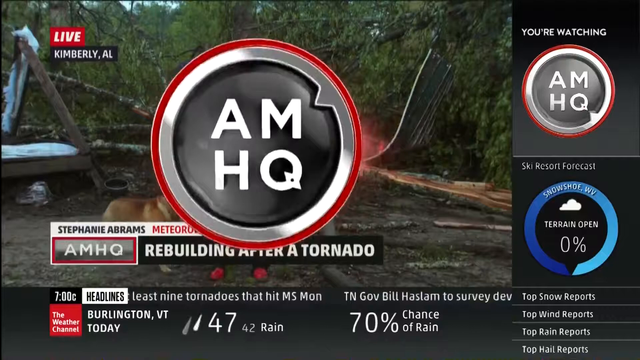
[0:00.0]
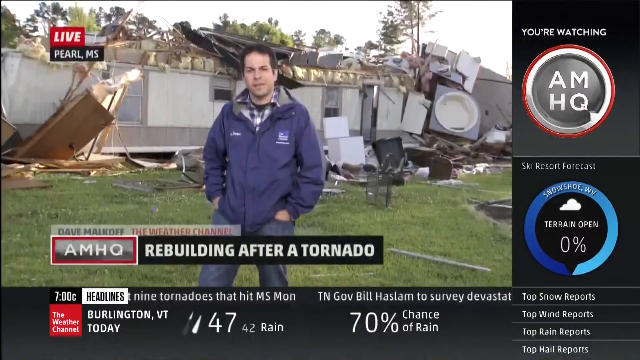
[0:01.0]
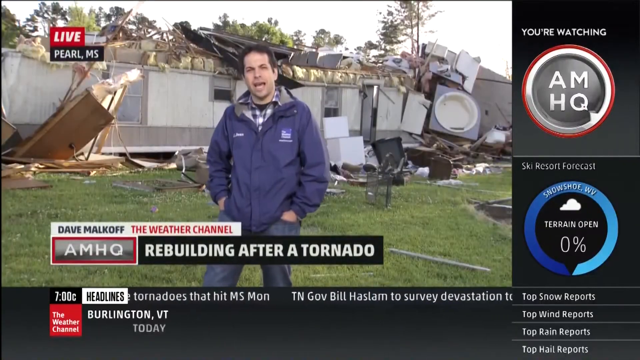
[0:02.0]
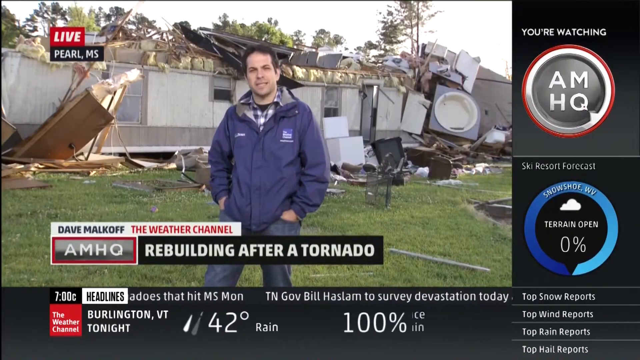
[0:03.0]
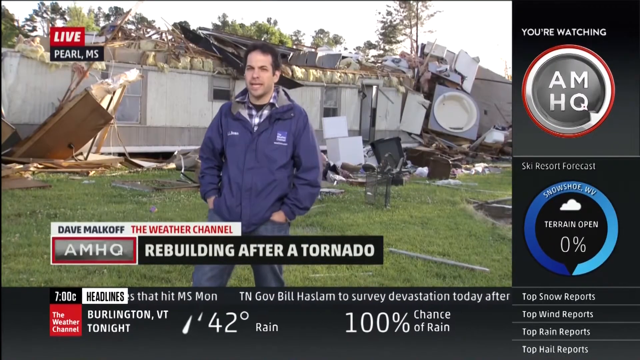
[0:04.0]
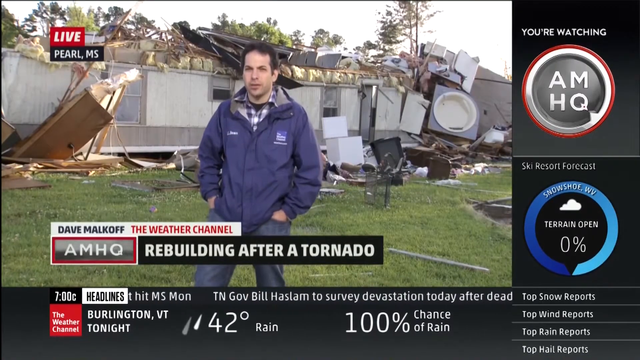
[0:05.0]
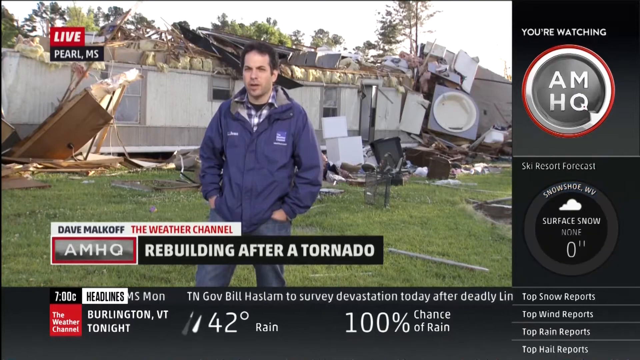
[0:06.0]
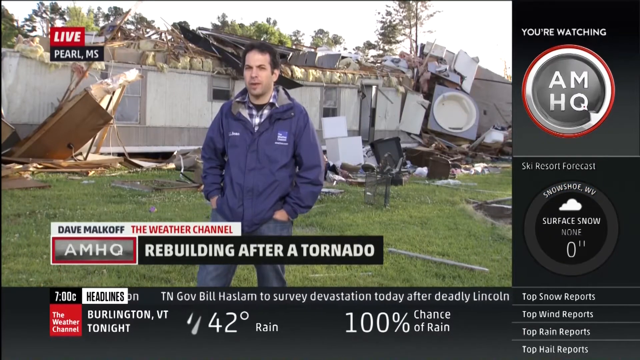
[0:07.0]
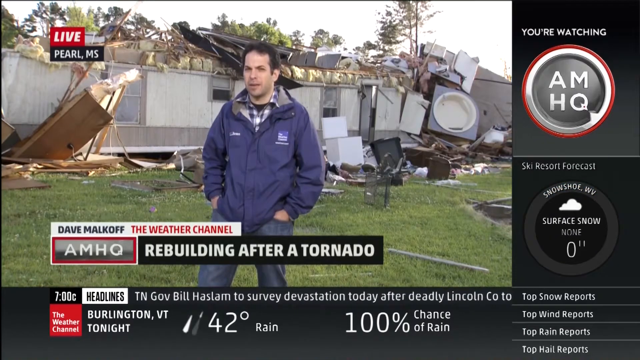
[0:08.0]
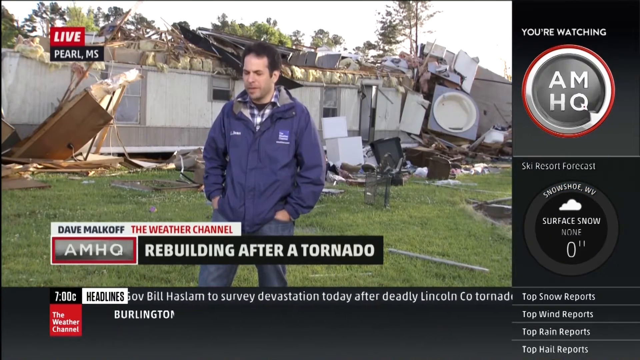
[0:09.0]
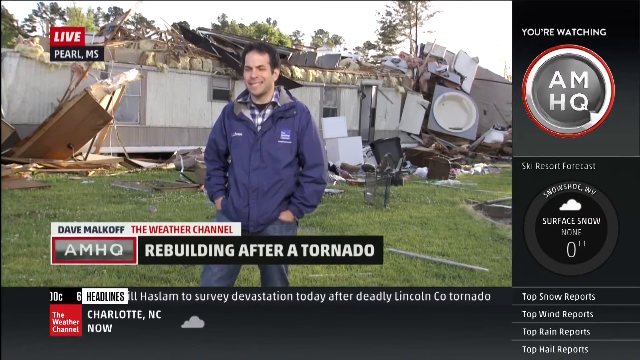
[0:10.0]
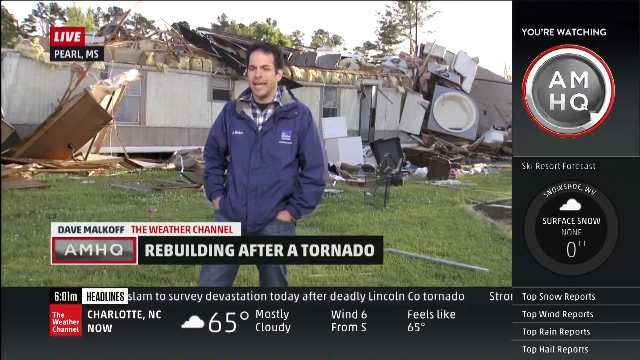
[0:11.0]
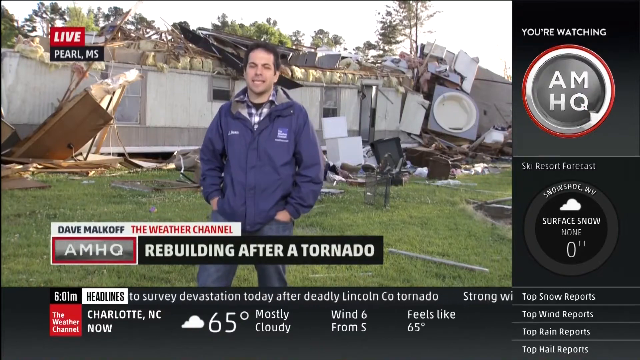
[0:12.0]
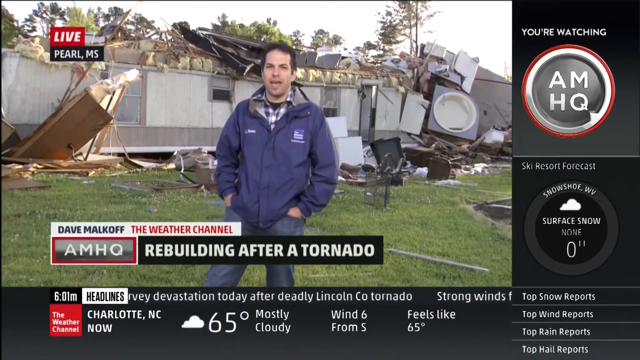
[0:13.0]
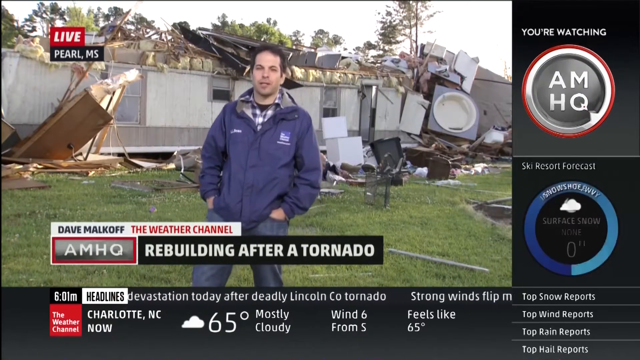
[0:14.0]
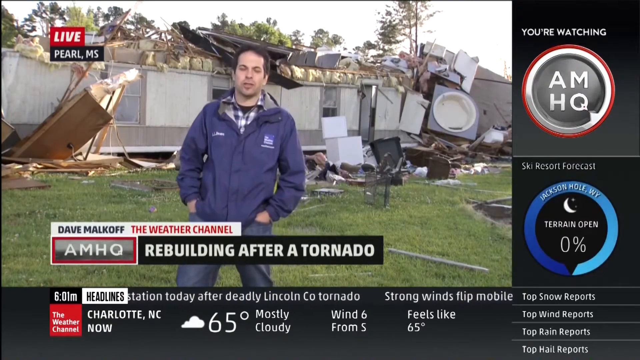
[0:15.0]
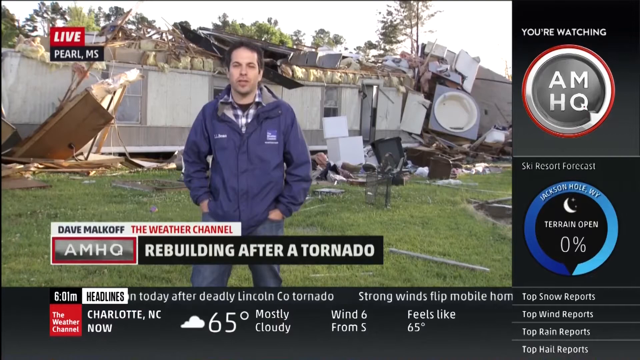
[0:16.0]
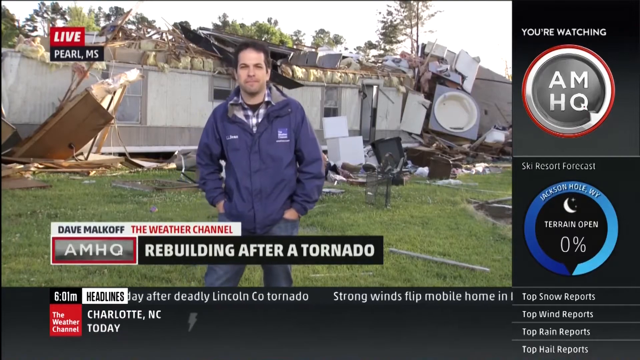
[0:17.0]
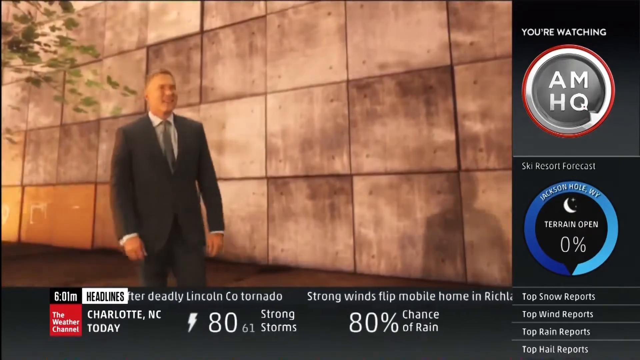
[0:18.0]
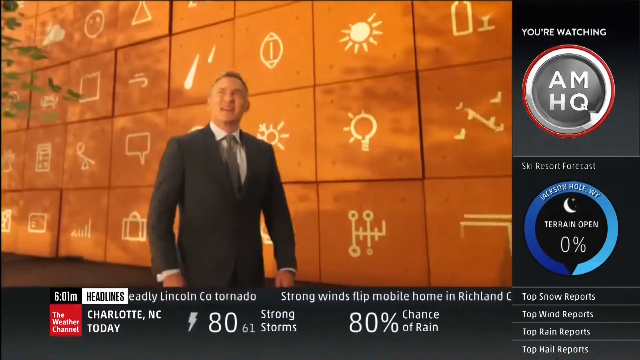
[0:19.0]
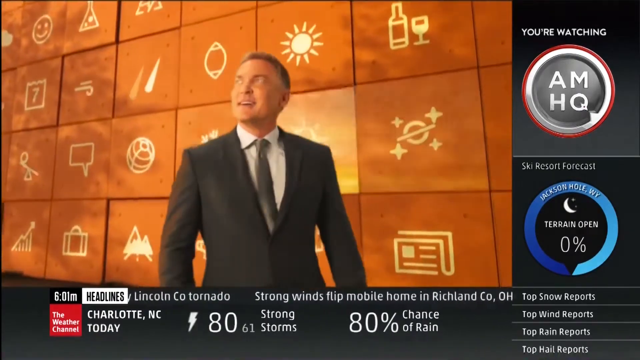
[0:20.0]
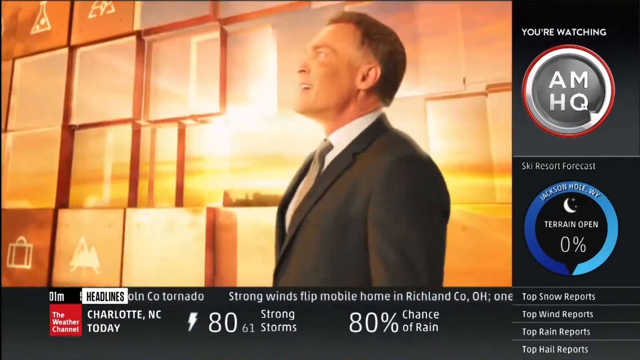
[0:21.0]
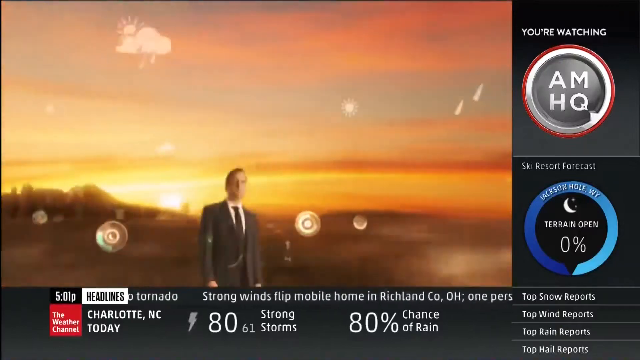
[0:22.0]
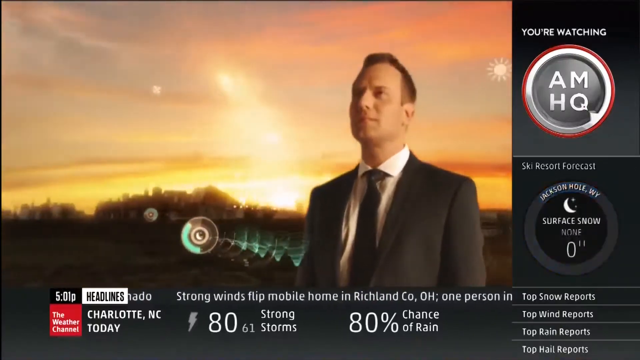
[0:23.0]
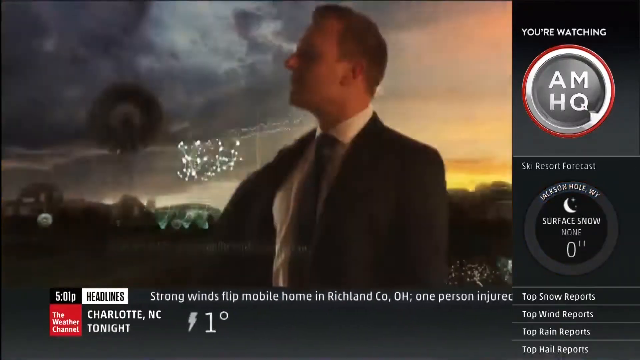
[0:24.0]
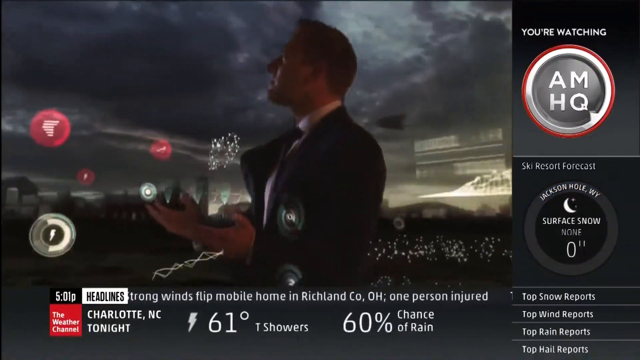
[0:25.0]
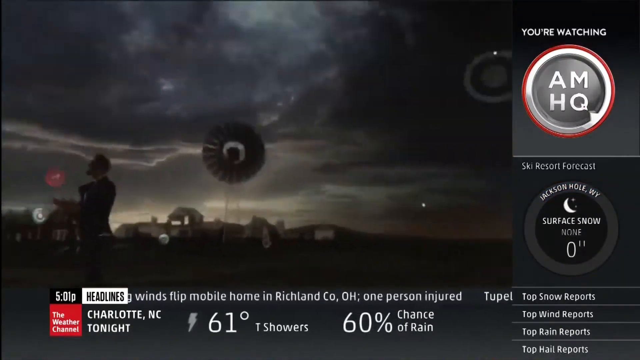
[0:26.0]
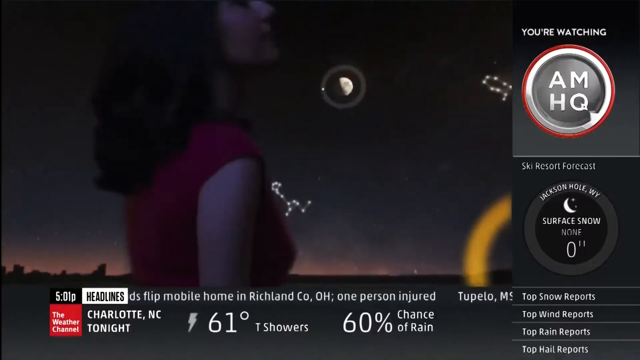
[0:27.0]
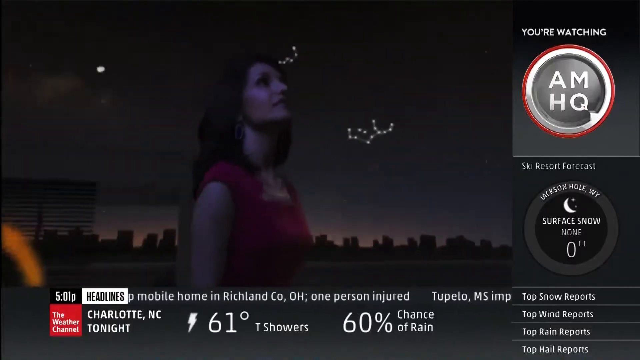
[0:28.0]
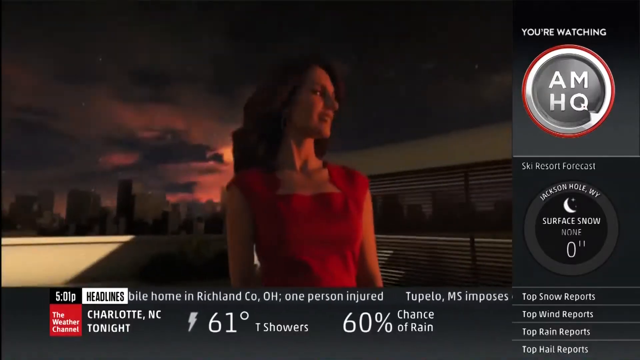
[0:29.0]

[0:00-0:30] A live AMHQ news video shows a scene destroyed during a tornado storm. A man at the destroyed property wears a blue jacket and puts his hand in his pocket; he is Dave Markoff from the Weather Channel. A man then walks through a kind of 3D environment where different images appear on the wall, like a screen or a cell phone lighting up, showing an engineering concept of what will be built and how the place will look after the rebuilding.